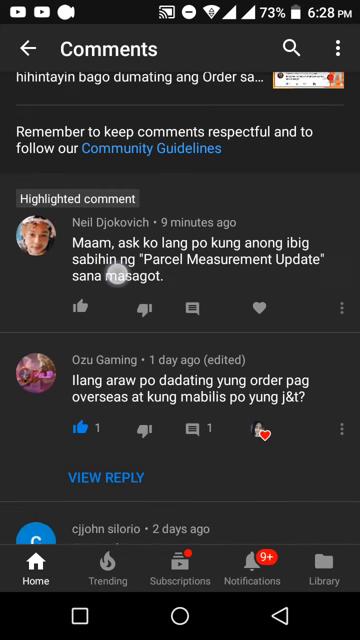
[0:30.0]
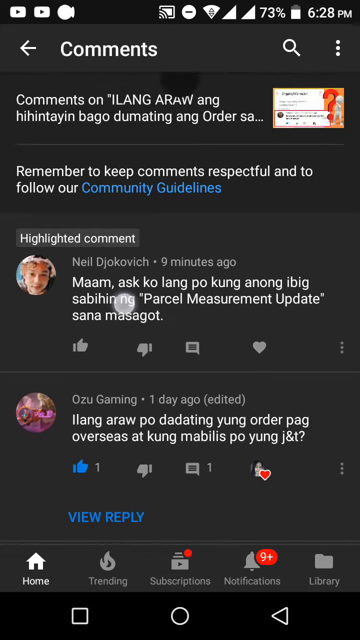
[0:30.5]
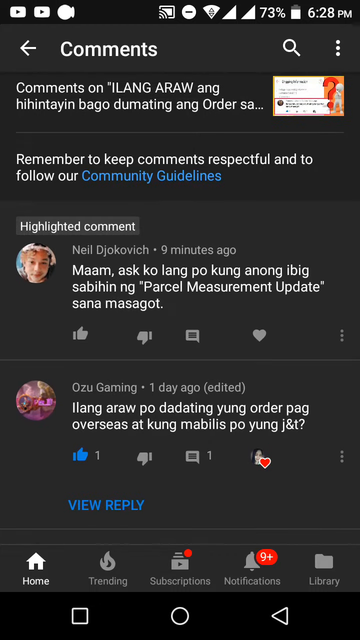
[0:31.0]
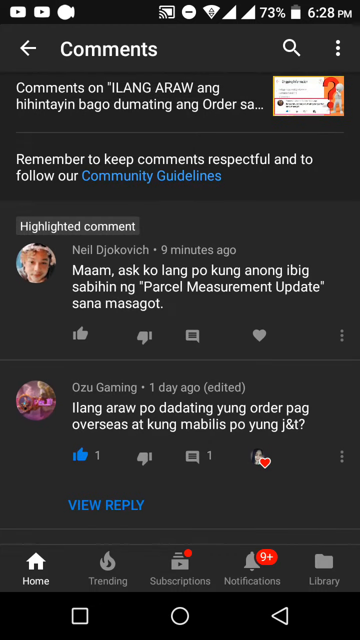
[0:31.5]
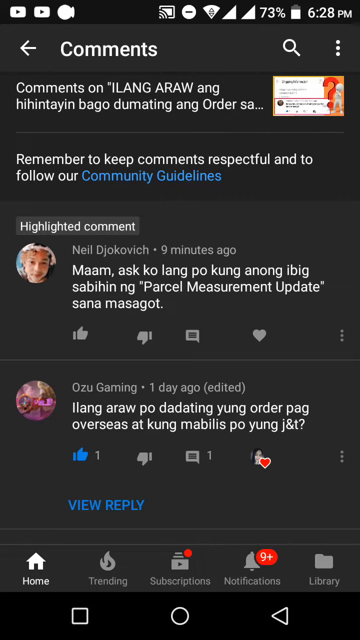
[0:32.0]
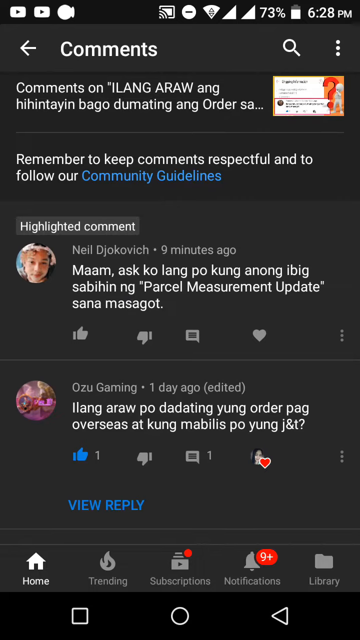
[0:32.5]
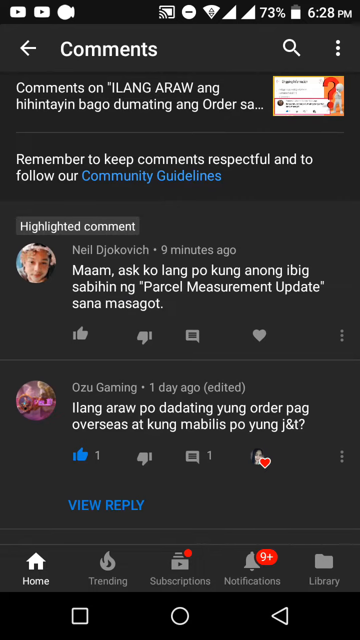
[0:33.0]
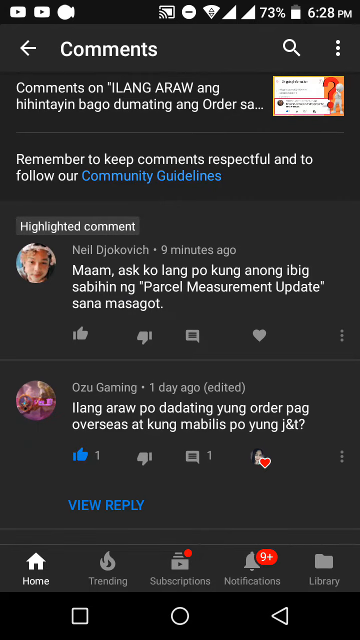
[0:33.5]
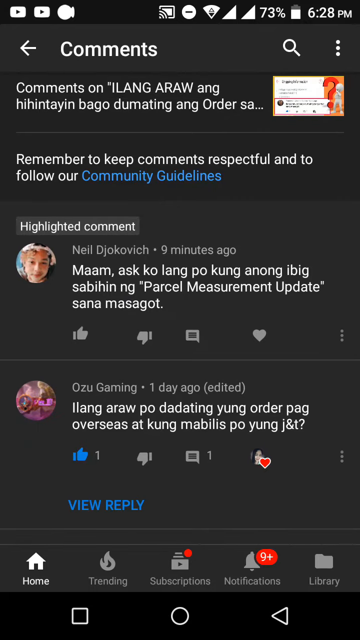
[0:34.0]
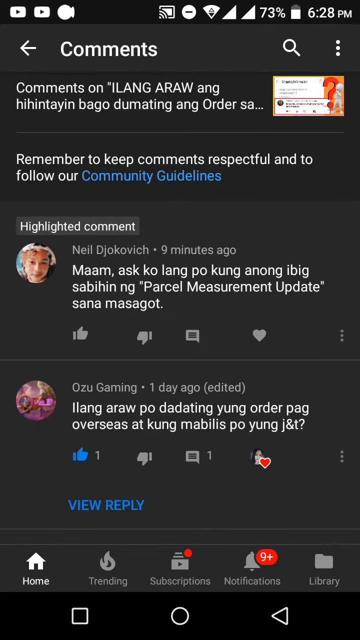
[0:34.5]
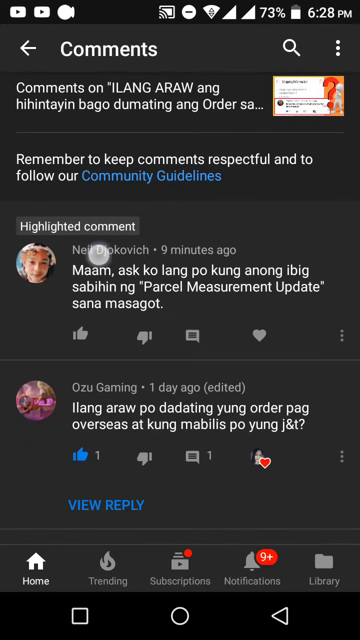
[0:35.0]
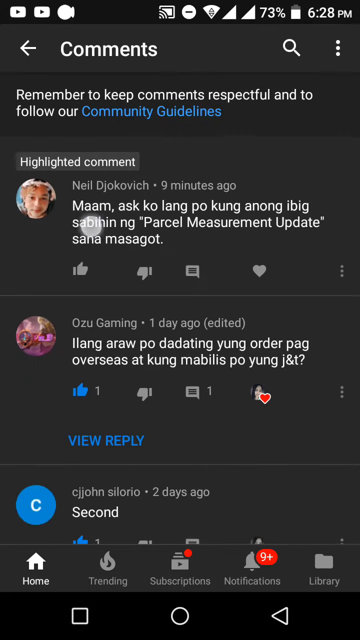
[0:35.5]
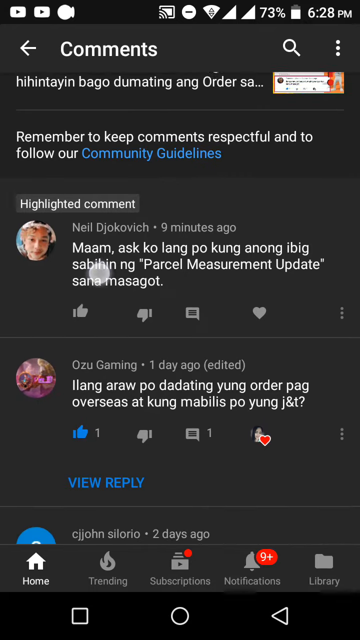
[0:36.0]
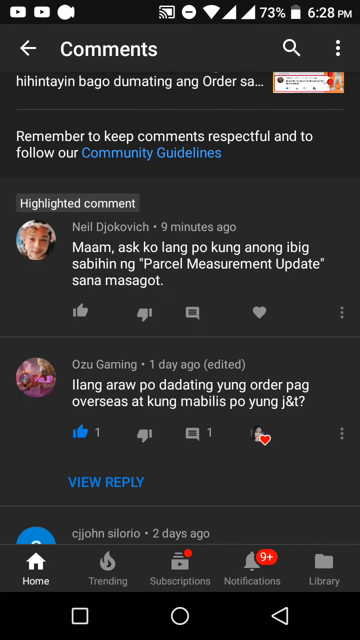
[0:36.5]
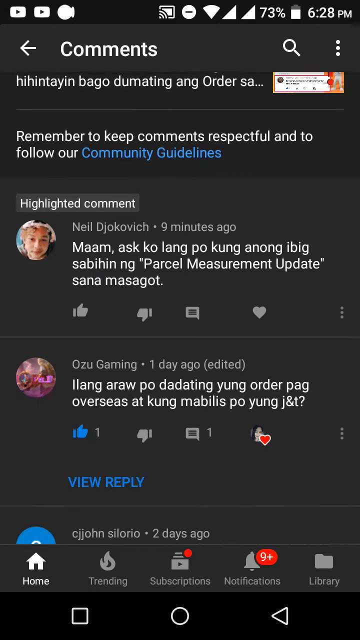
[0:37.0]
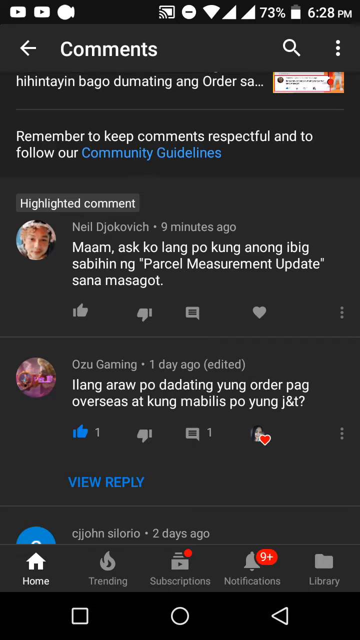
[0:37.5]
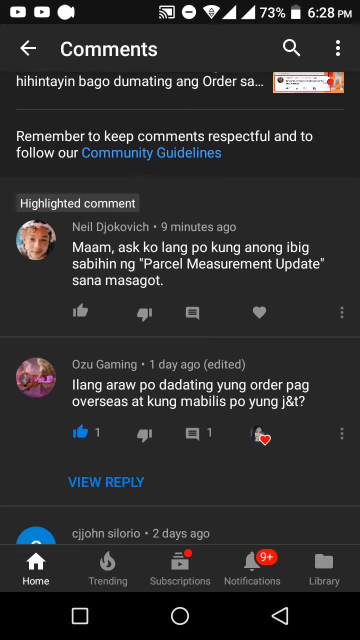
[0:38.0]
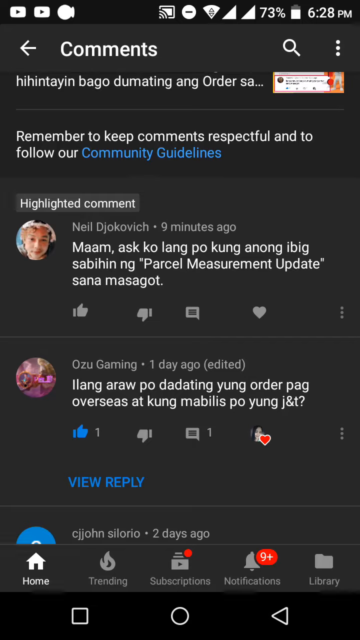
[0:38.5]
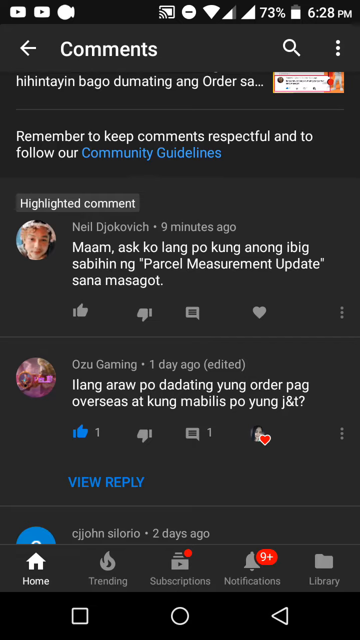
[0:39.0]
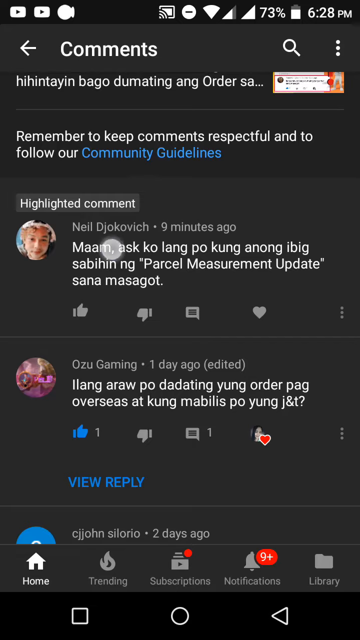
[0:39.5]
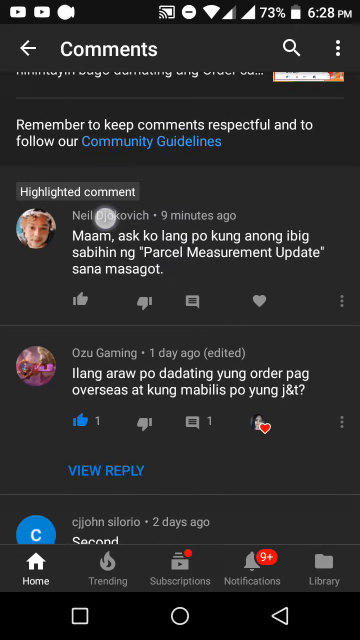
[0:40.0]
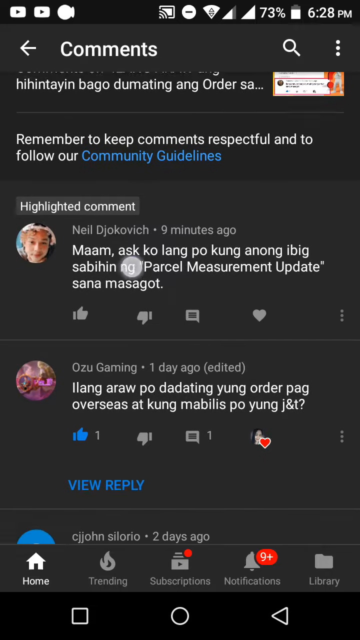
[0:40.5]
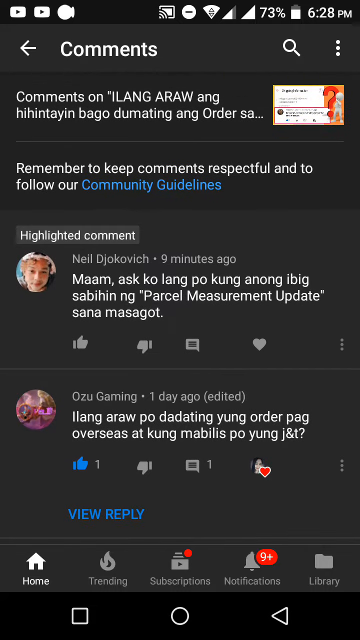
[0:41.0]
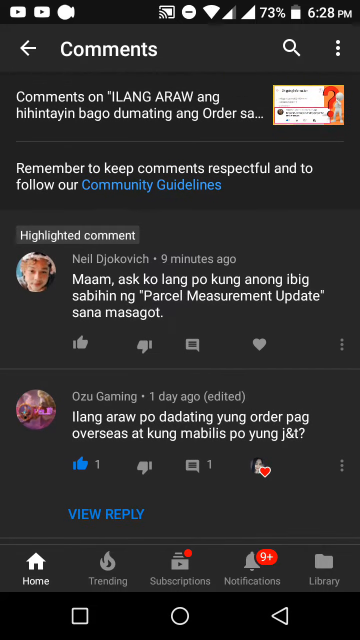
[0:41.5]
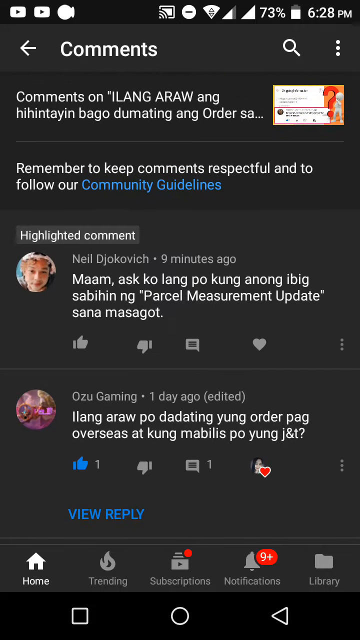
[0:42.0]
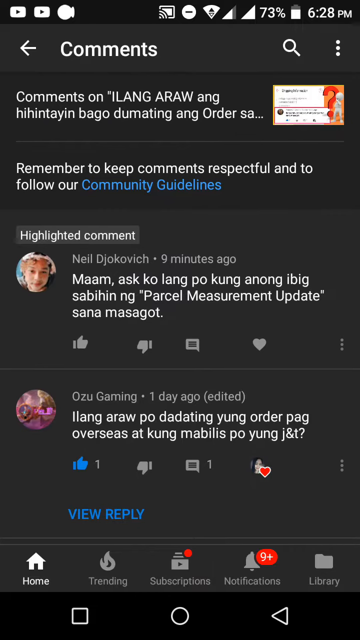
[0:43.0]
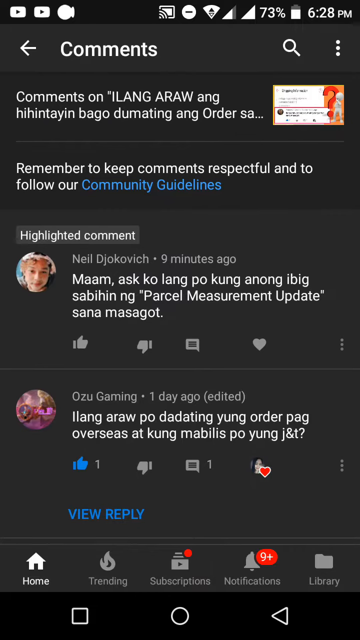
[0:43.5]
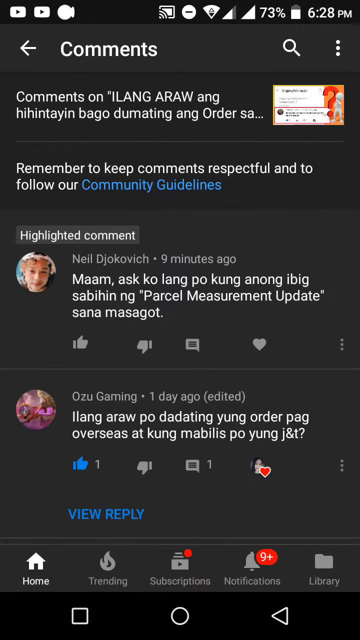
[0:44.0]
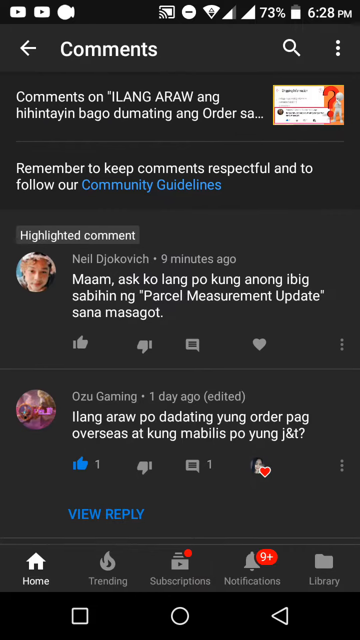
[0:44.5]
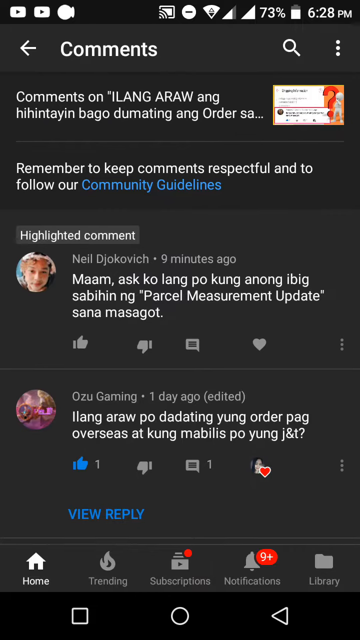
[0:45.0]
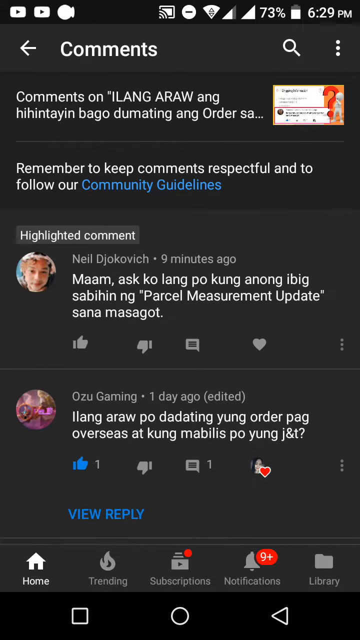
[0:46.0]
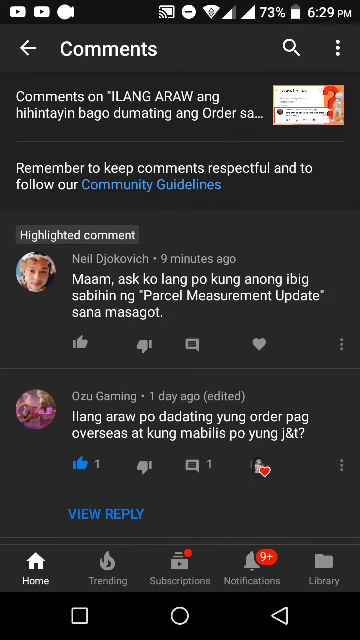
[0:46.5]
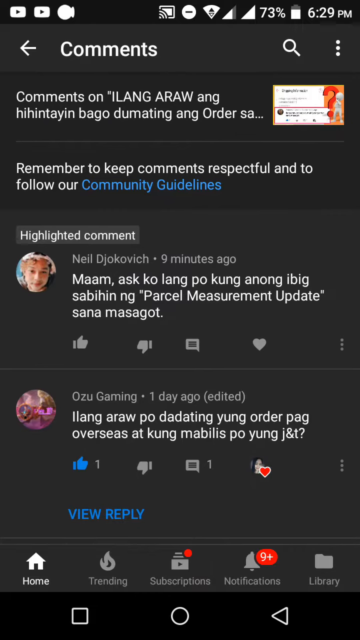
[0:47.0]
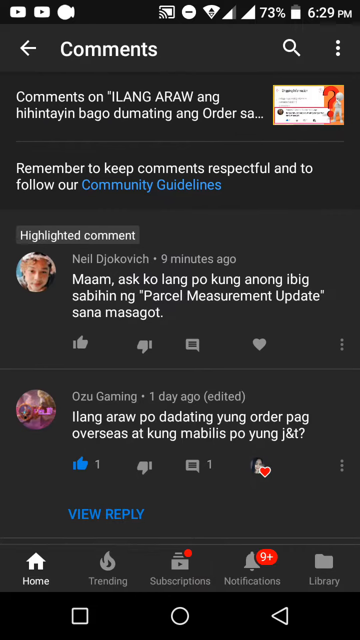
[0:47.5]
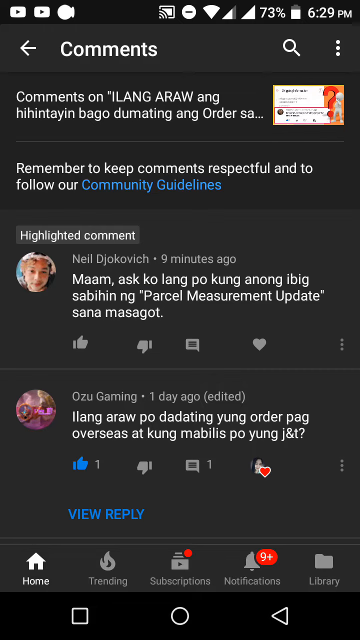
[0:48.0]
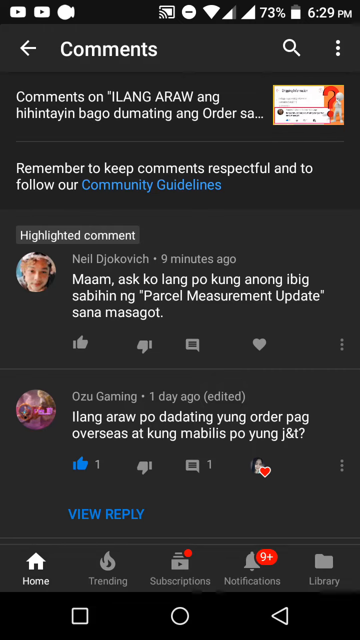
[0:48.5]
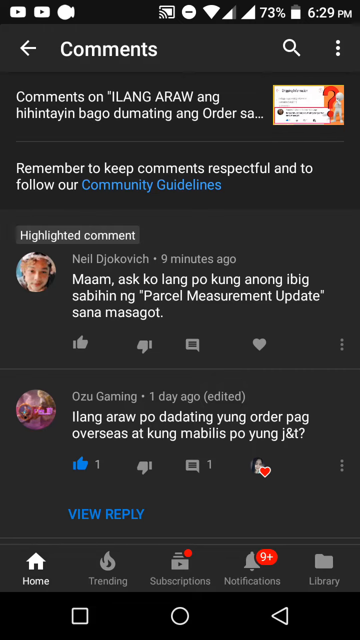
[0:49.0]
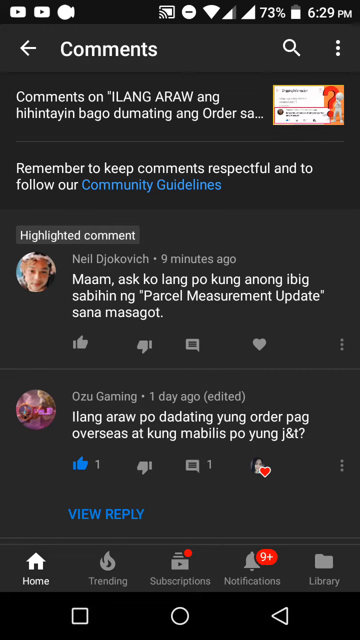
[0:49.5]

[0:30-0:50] A mobile device screen with a dark gray background shows the comments page of a social media application. At the upper left of the page, "comments" is written in white text. The rest of the text is mostly white, except for a few words in blue. There are two comments on the page. The upper one is a highlighted comment from Neil Djokovic from nine minutes ago, written in a foreign language. The one below it is from Ozu Gaming, also in a foreign language. Above the comments, written in English, it says "remember to keep comments respectful and to follow our community guidelines." A small round white cursor appears briefly and scrolls up a bit, though the comments remain in view. The cursor scrolls the comments slightly up and then down, and the comments stay on the screen.